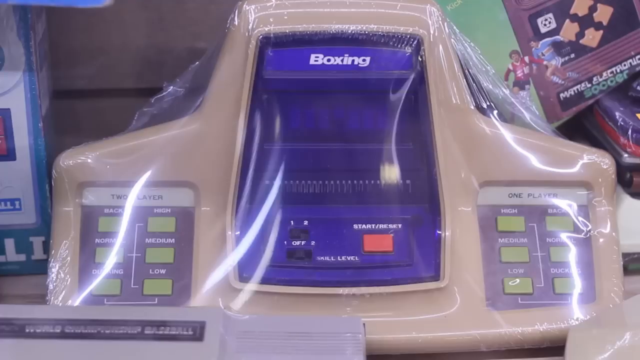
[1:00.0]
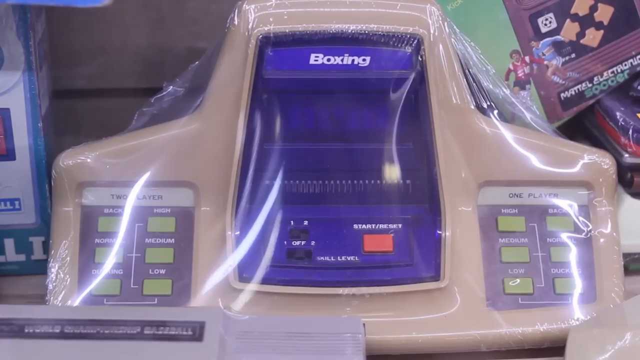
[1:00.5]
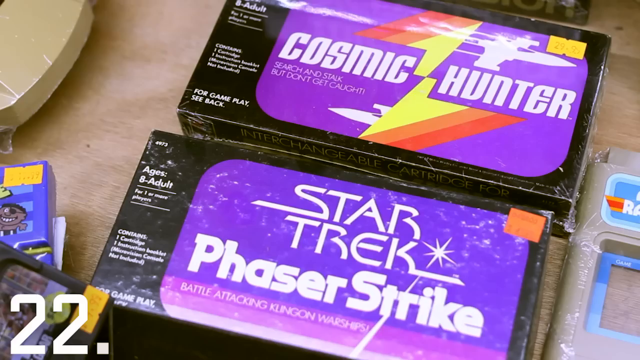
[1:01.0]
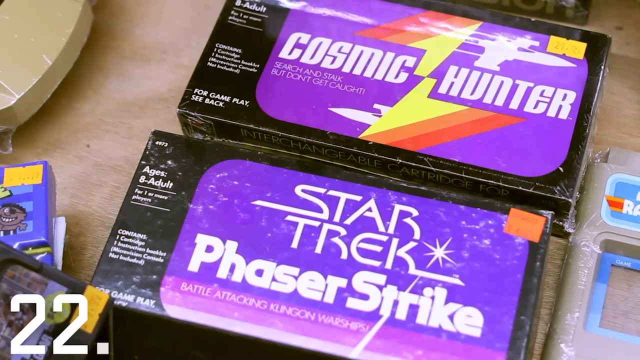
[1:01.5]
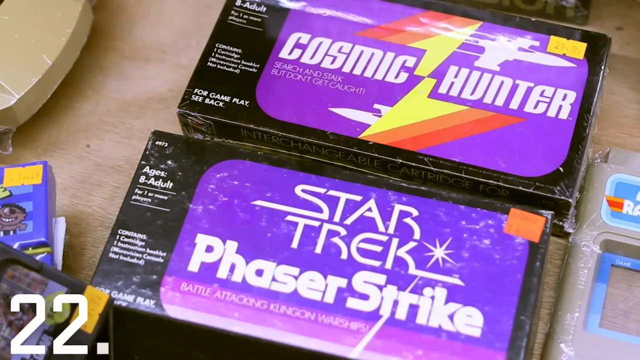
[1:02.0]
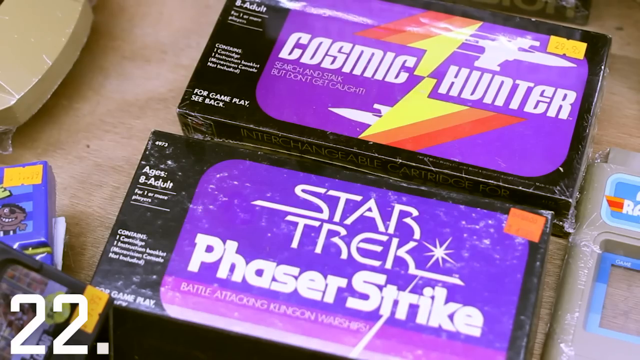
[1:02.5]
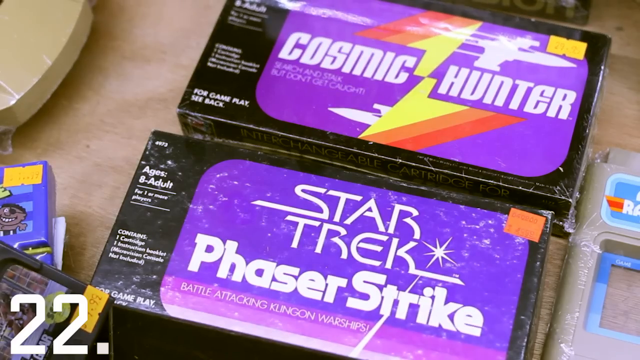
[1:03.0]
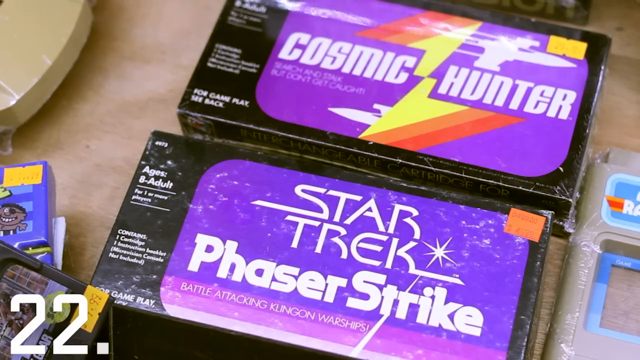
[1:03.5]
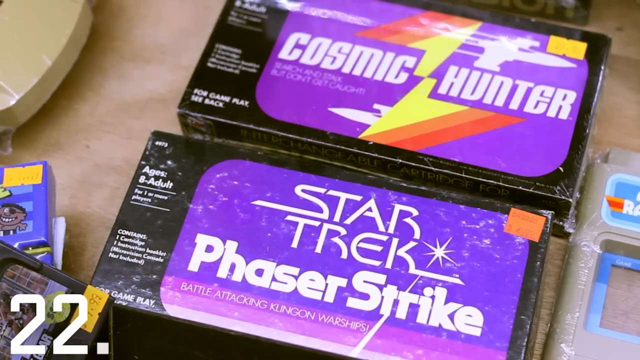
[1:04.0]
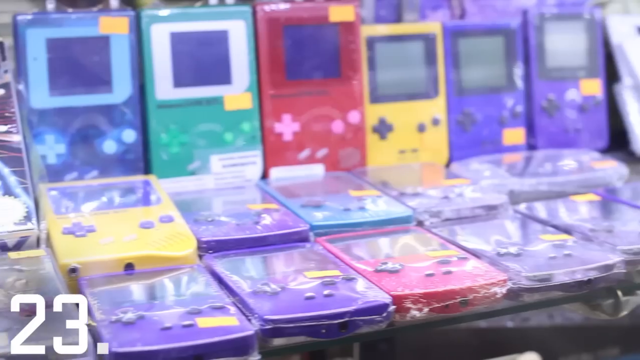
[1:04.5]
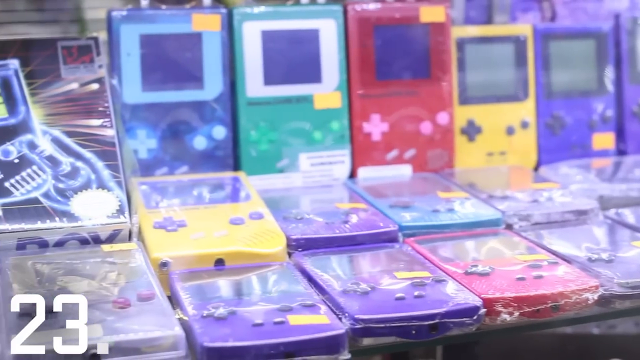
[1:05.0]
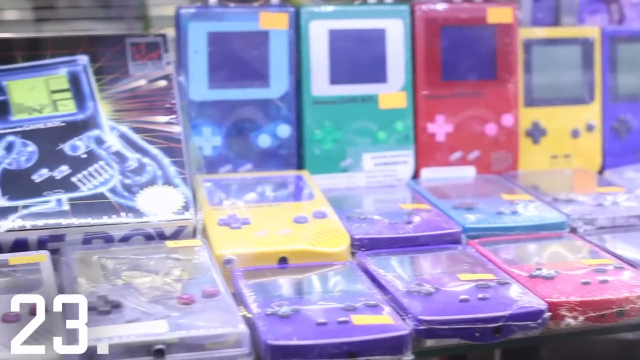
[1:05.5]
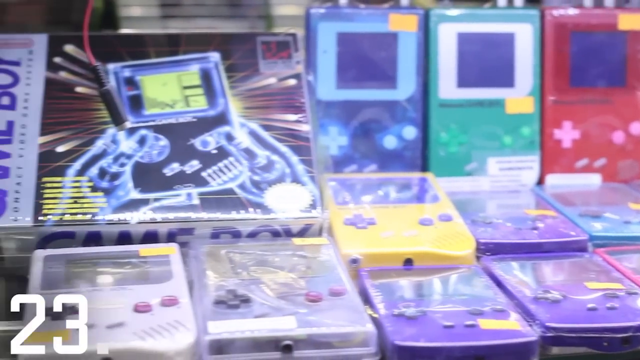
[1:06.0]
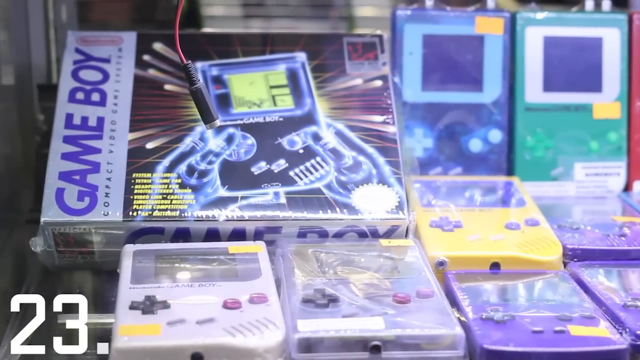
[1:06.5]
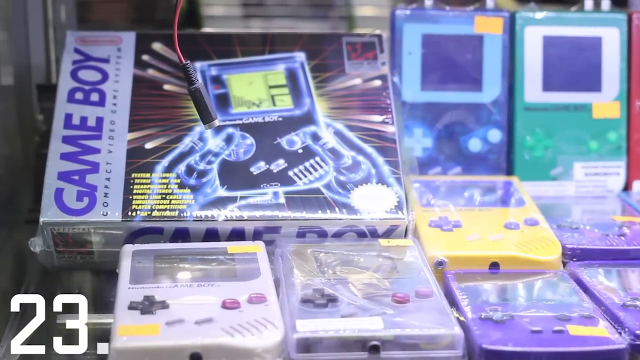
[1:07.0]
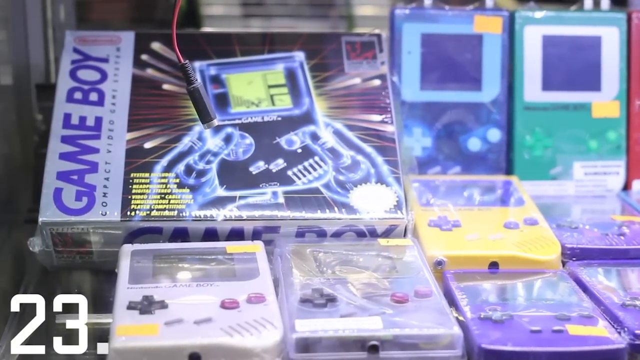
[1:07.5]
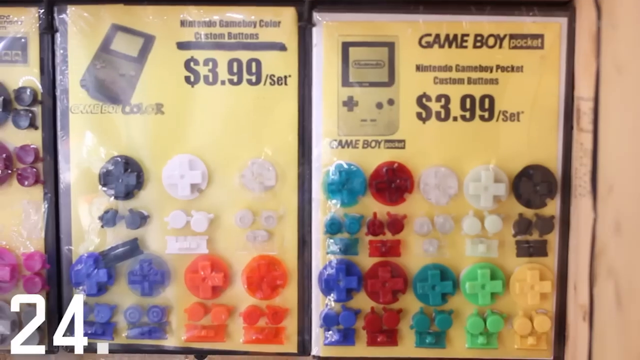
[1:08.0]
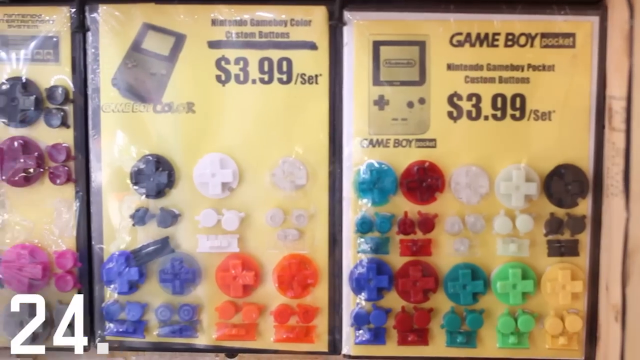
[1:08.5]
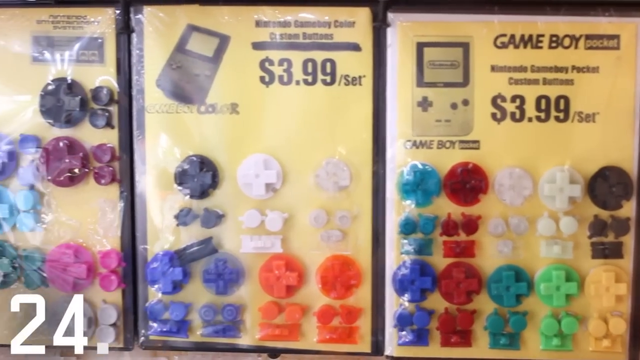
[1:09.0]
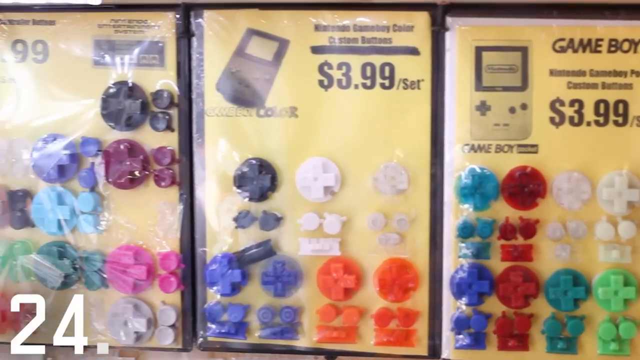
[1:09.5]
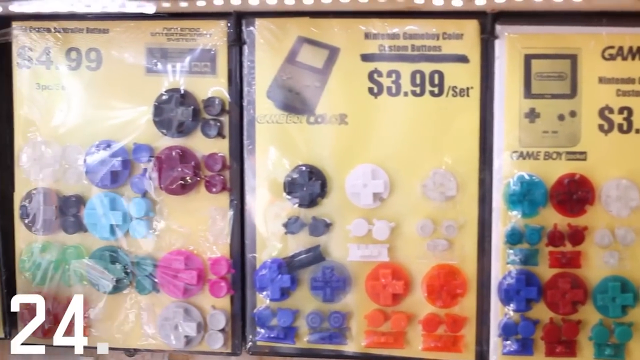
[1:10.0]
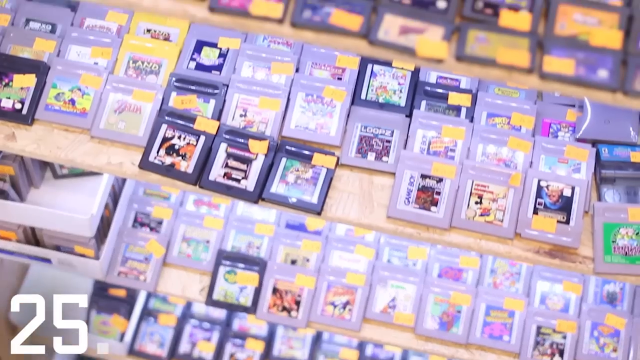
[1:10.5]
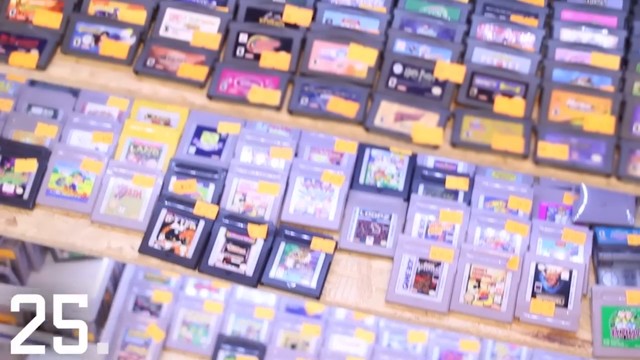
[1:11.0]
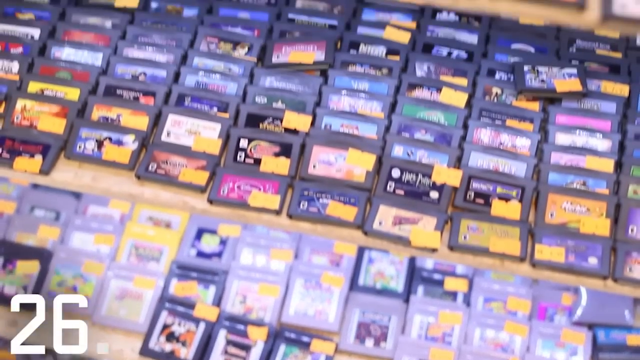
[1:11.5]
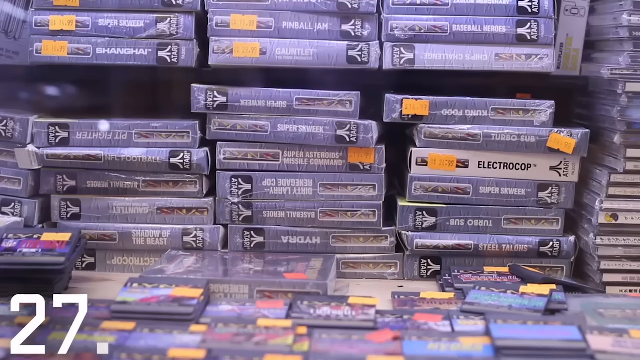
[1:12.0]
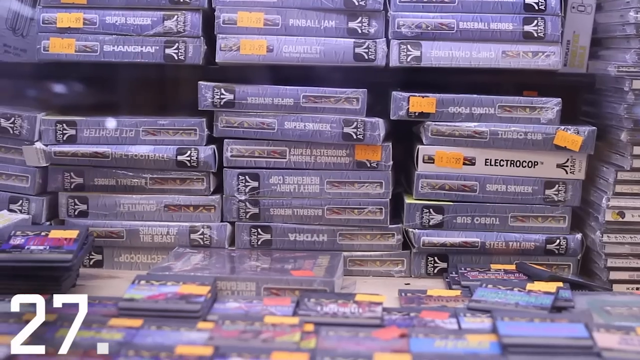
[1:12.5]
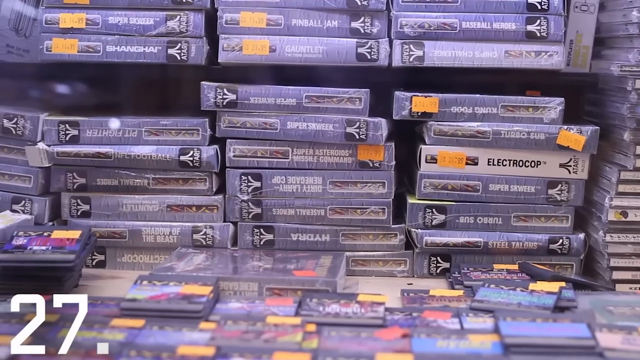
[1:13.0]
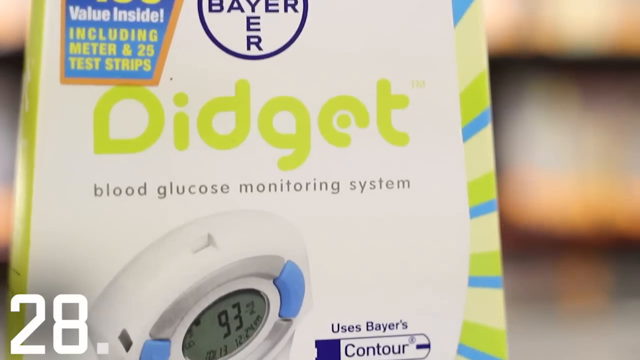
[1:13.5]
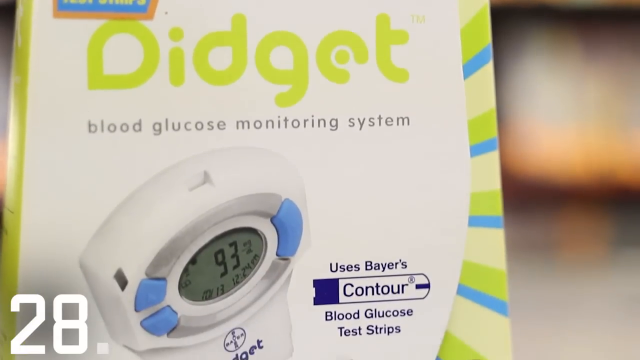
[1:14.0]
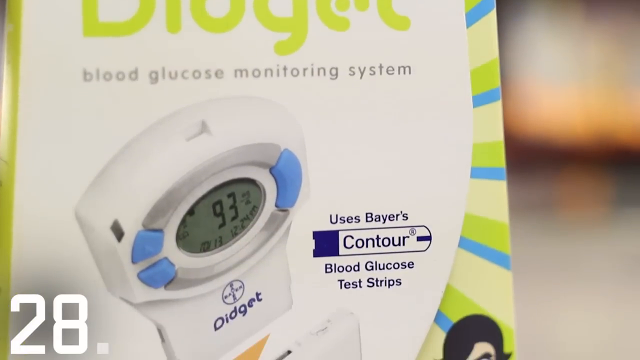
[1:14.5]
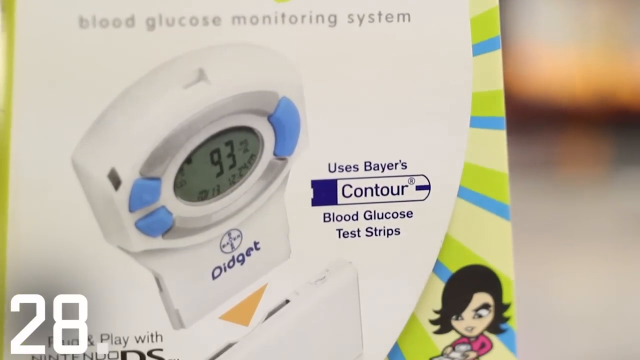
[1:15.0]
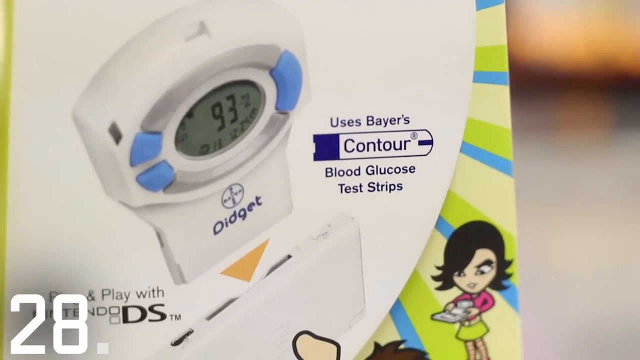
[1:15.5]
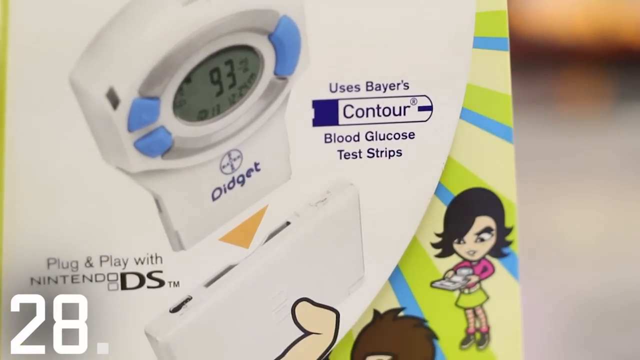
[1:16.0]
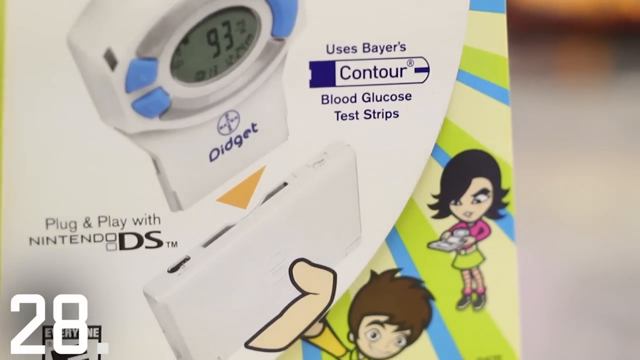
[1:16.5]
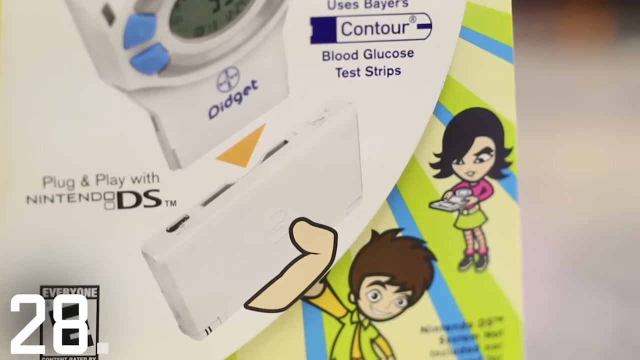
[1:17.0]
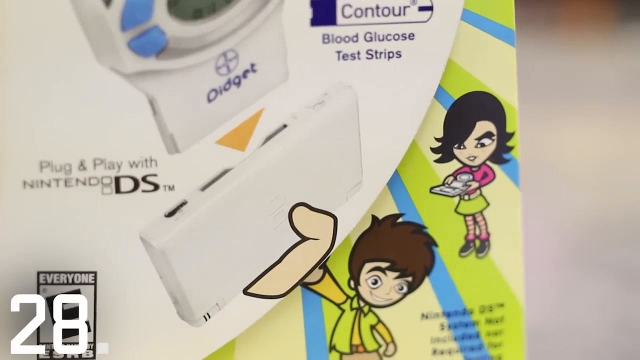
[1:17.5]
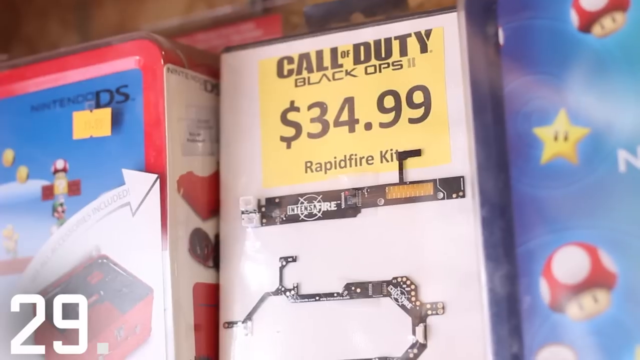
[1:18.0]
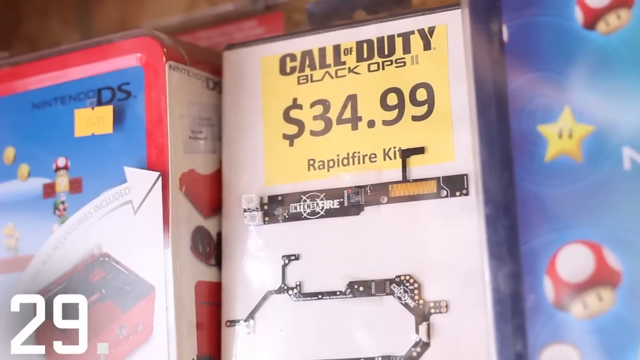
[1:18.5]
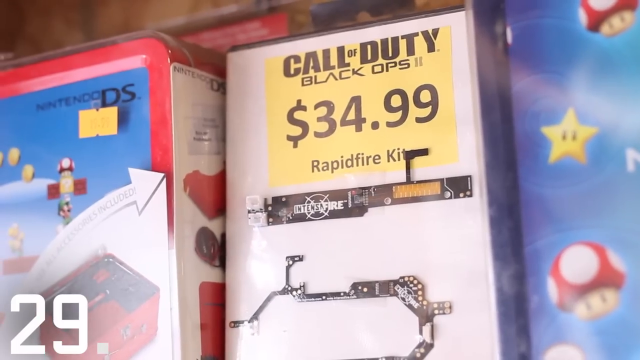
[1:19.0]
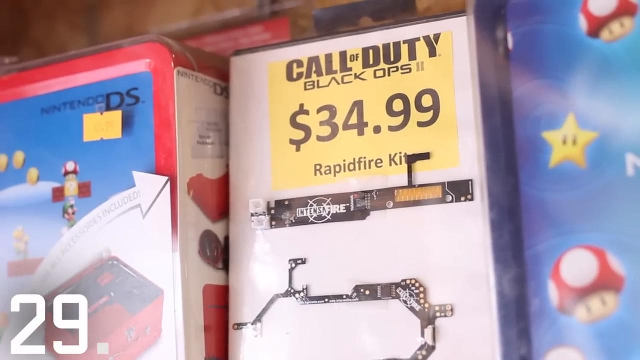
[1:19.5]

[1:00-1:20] A Mattel electronic soccer game is shown, an old handheld game, probably from the 70s or 80s. In the foreground there is what looks like an old handheld boxing game with all kinds of buttons; some read "high," "medium" and "low," while the other buttons cannot be made out because of glare. There is some kind of box that says "Star Trek," "Phaser Strike" and "ages 8 to adult," and another box similar in size and color that says "Cosmic Hunter," "8 to adult" and "For gameplay, see back." A display then shows a bunch of Game Boys of all different types, colors and styles, big and small, all wrapped in cellophane. Next, Game Boy replacement buttons in different colors are shown in sets on cardboard backs with cellophane wrap, priced at $3.99 a set.